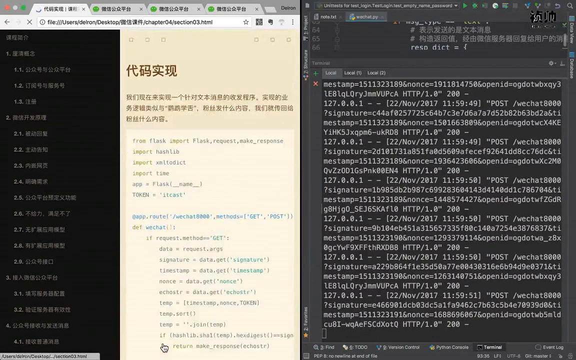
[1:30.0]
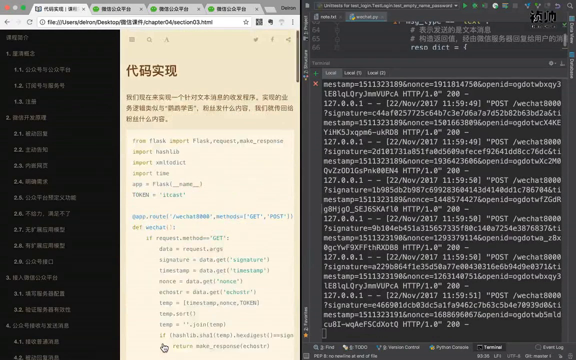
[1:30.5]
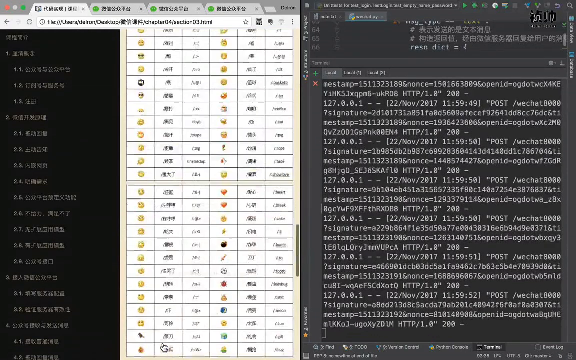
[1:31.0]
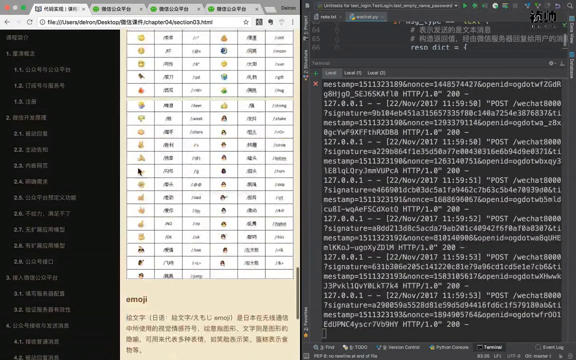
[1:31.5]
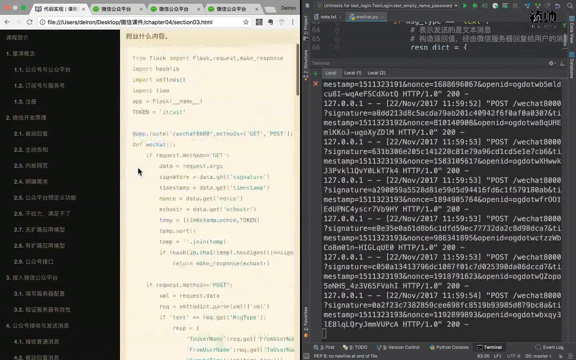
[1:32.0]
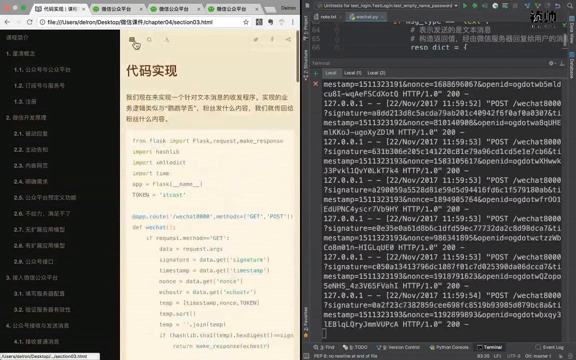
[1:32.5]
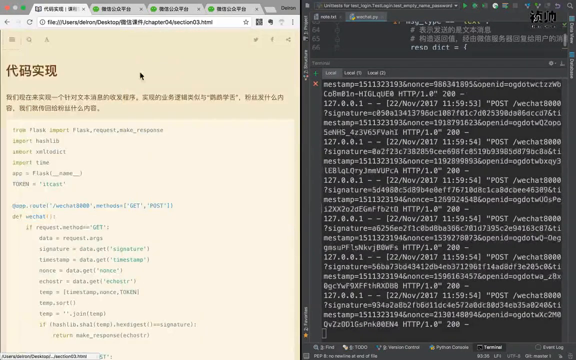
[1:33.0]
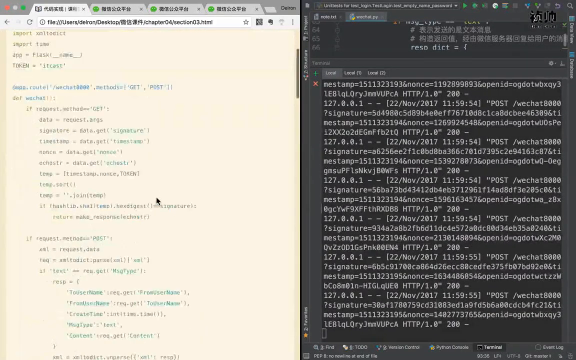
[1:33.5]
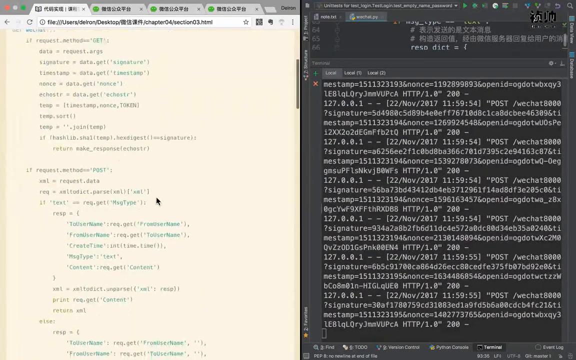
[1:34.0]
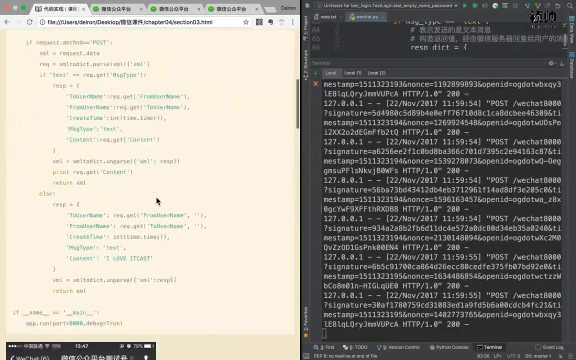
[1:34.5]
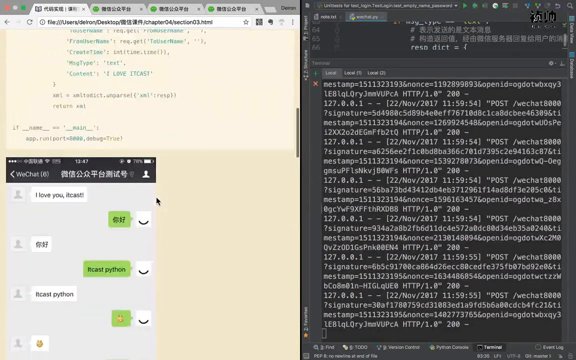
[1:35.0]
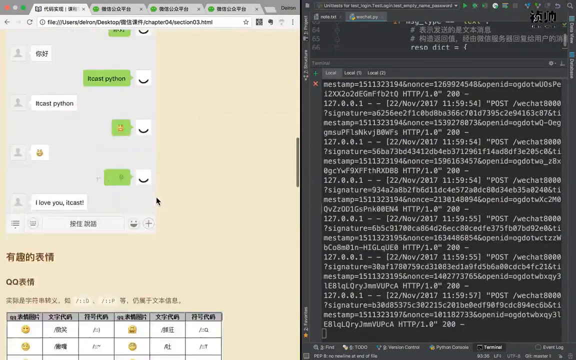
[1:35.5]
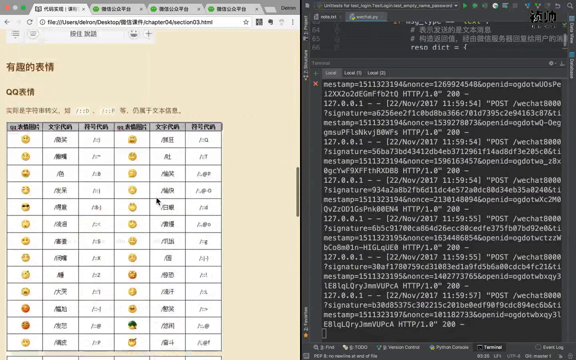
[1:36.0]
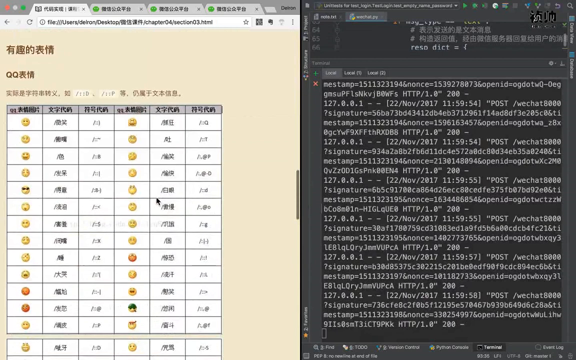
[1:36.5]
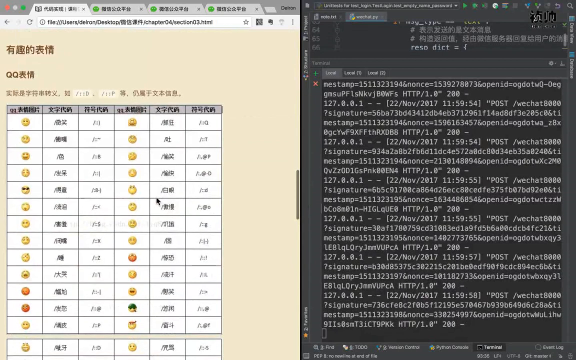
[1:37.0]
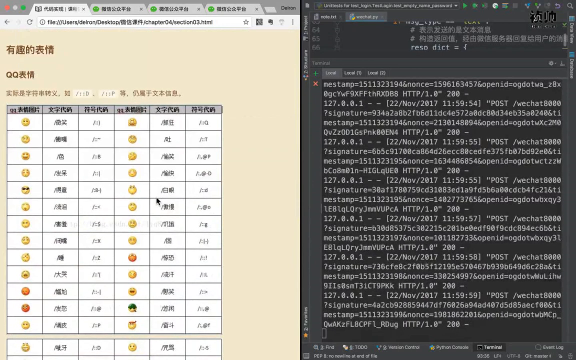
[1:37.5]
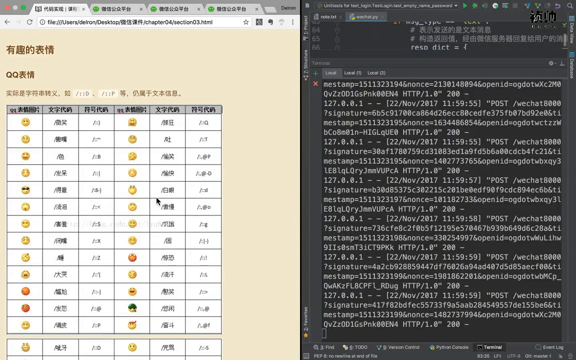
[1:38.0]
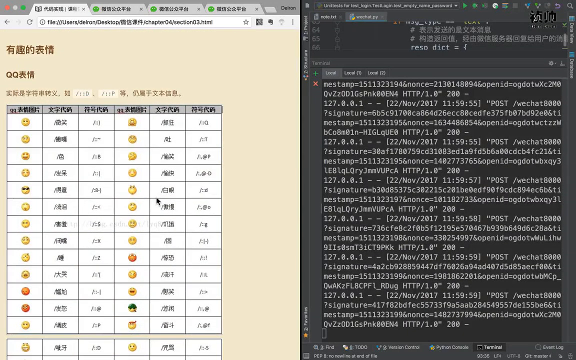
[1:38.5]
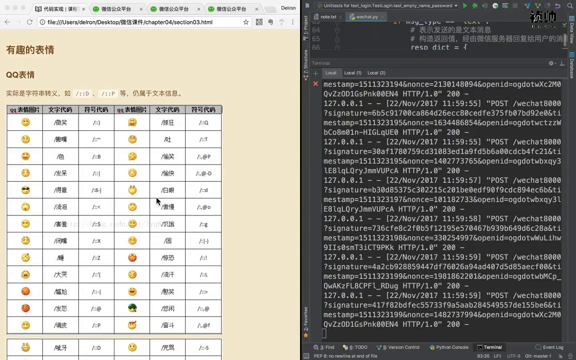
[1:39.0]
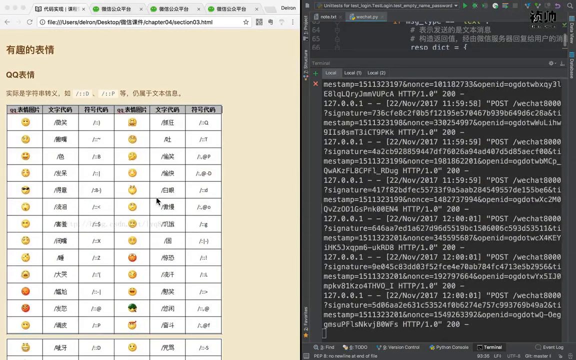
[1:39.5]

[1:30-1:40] A new page comes up, probably after he has clicked on the 4.4 option. It shows a large table filled with emojis, with text associated with each emoji in the same row. He scrolls down and up through it, then quickly scrolls up through the page, looks at some other options and clicks on some things. He appears to be about to hover over and click on the very first emoji, which looks like a regular smiling emoji.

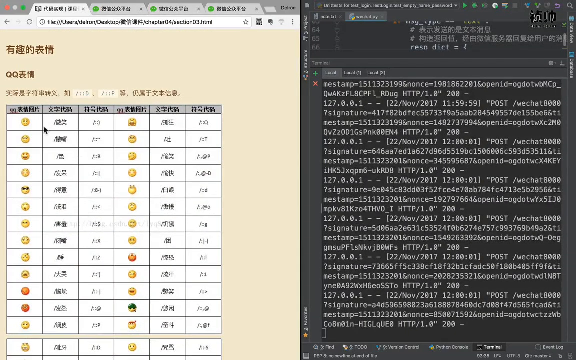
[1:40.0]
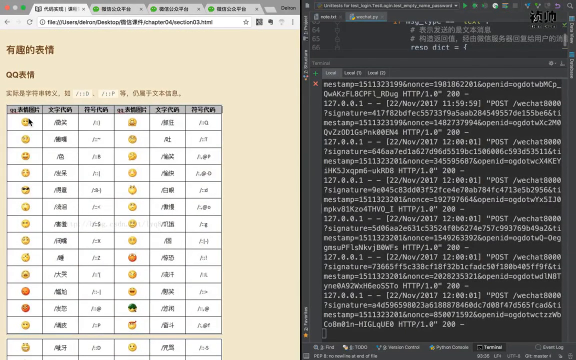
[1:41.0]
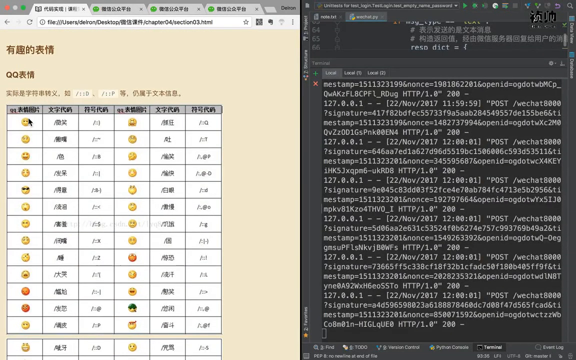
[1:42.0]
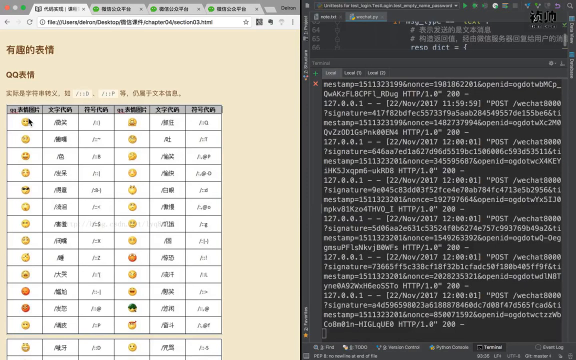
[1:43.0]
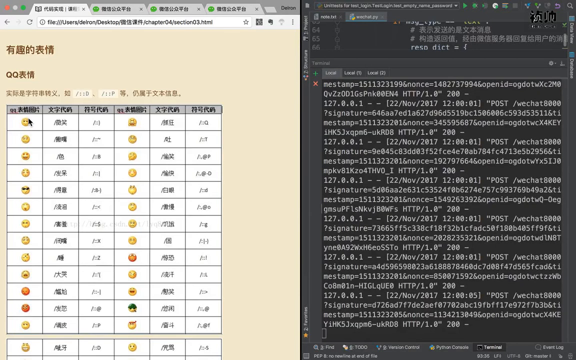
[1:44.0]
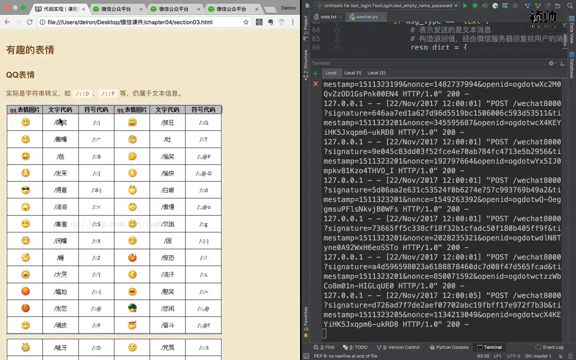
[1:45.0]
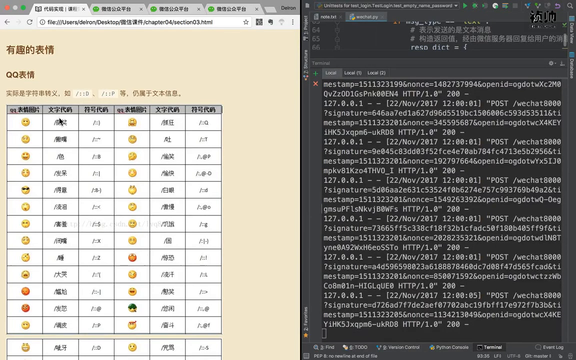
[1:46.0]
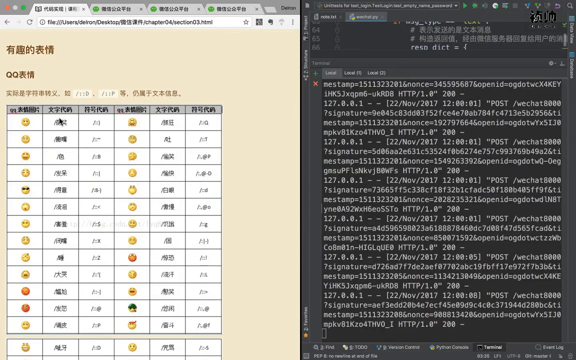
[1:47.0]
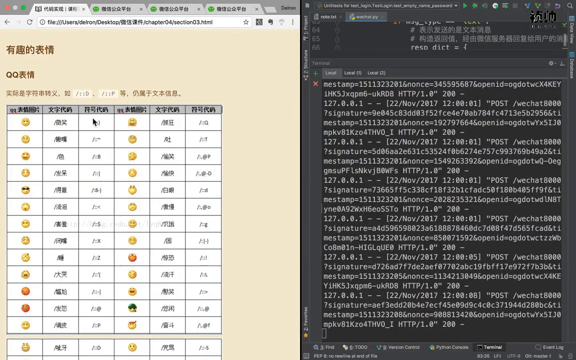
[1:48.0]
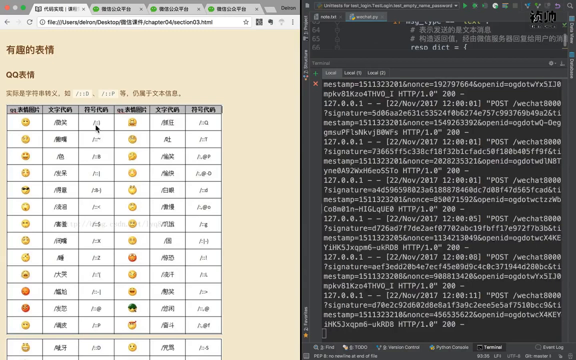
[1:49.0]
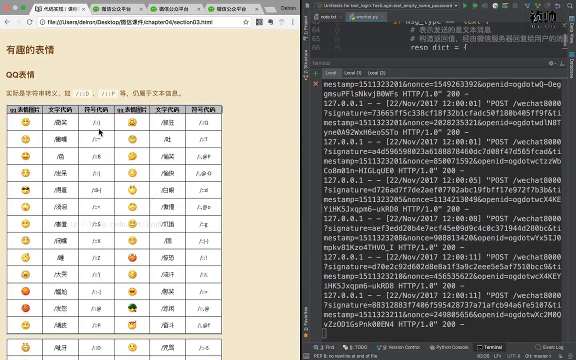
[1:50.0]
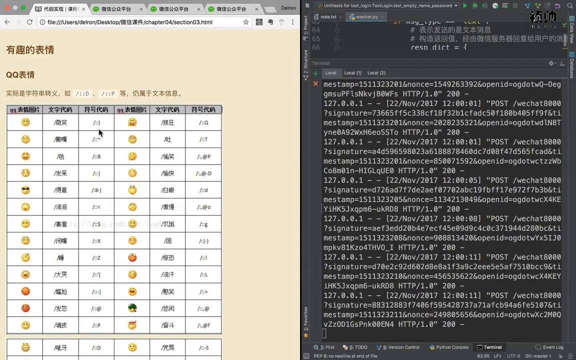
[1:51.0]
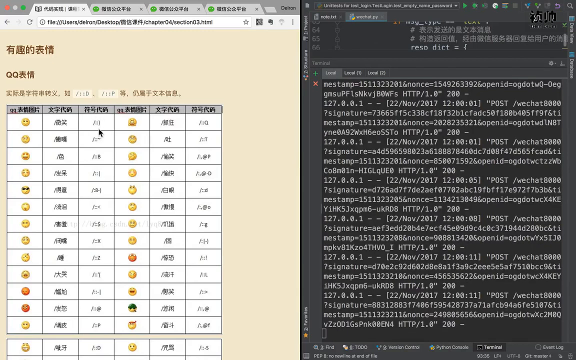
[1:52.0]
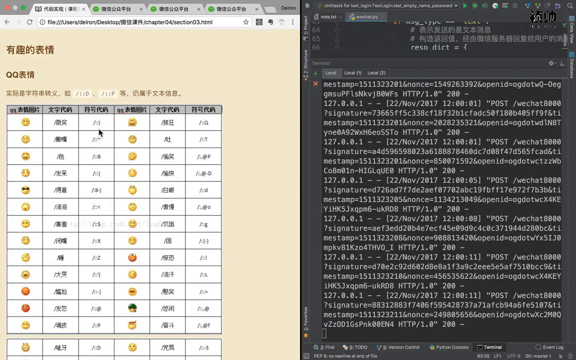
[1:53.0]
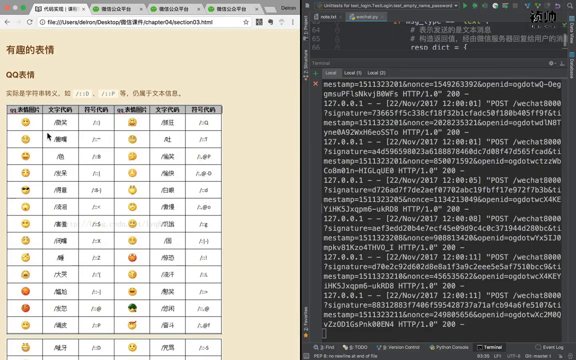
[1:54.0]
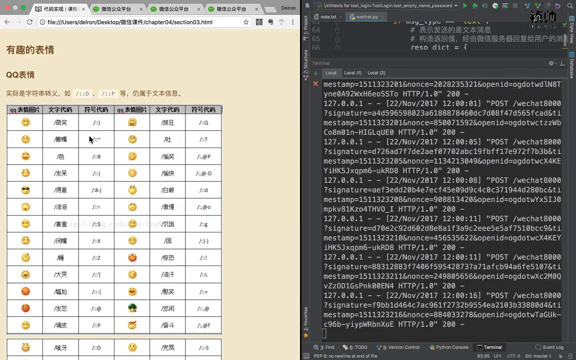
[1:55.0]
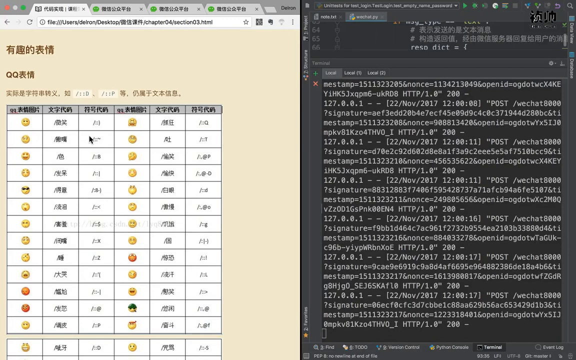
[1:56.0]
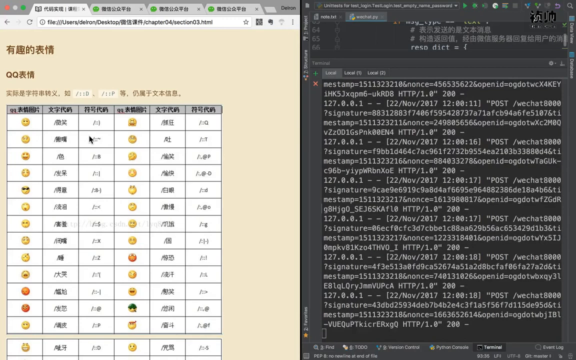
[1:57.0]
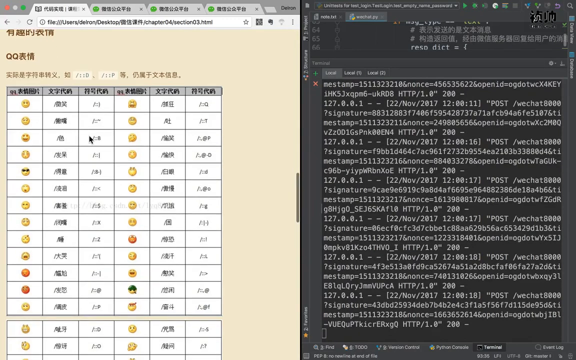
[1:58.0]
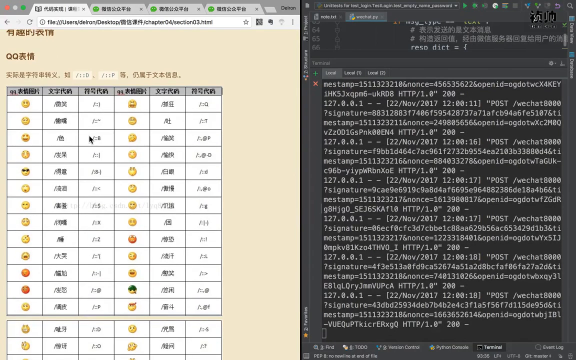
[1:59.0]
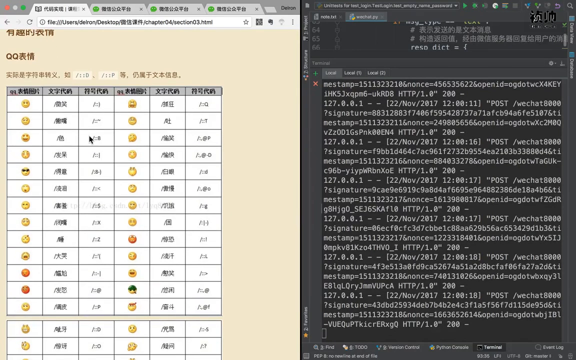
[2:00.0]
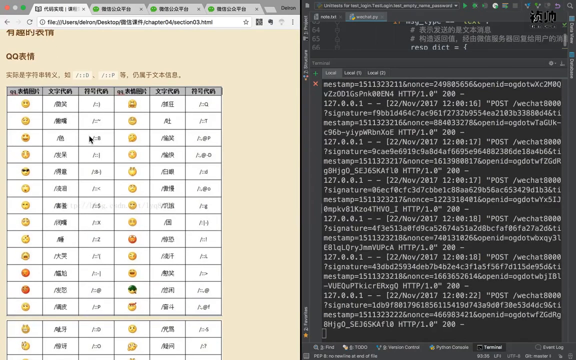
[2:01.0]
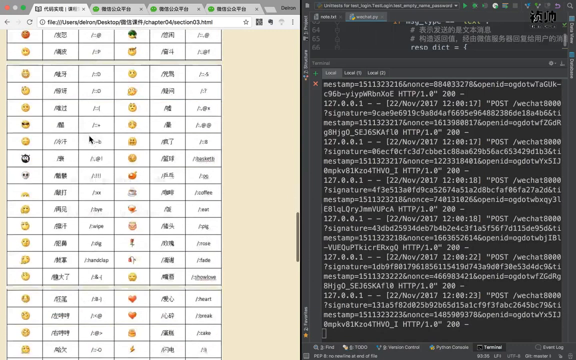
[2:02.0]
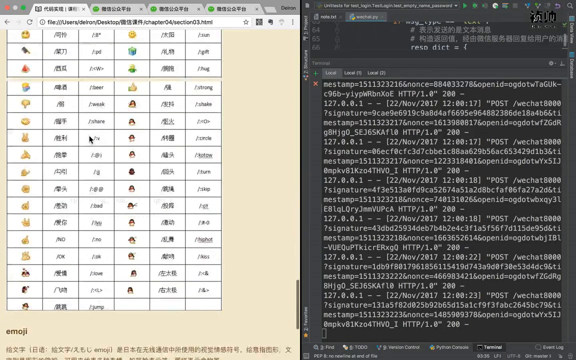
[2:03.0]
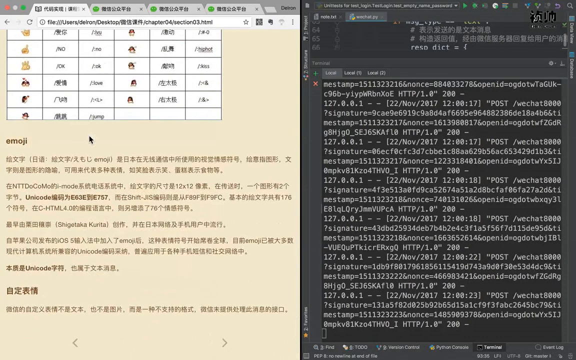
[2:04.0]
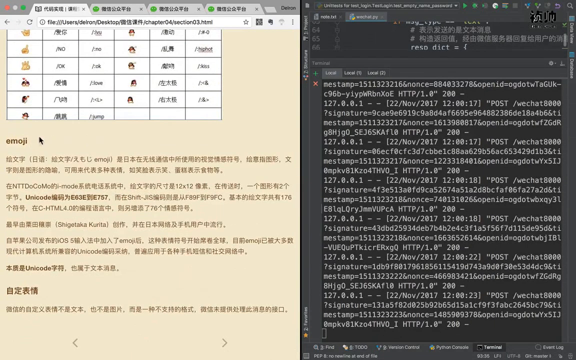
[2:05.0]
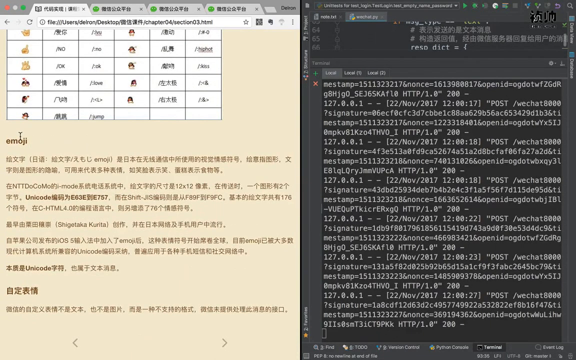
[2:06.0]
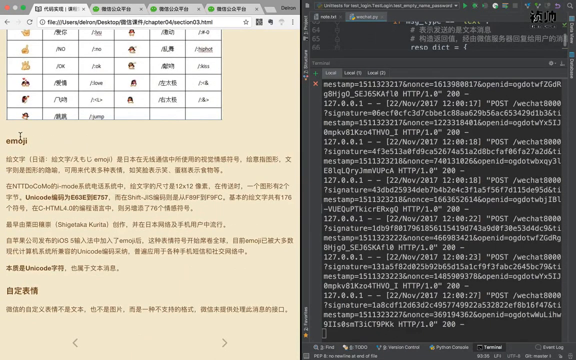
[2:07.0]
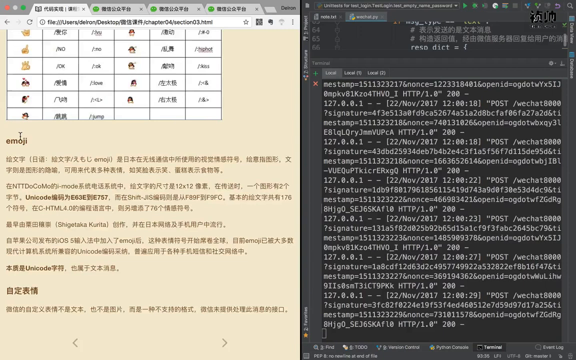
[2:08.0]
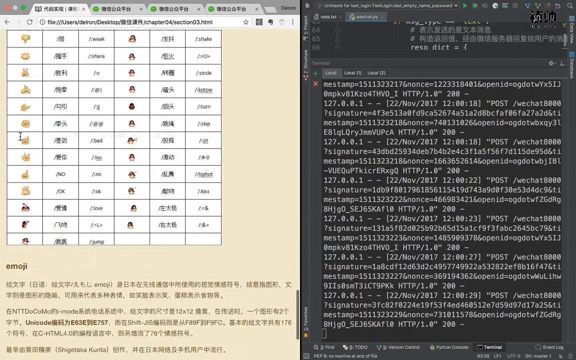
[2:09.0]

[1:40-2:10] He is still hovering over the smiling emoji, then hovers over text in the column to its right. The text appears to be symbols that might produce these emojis; for the smiling one, it seems to be a forward slash, two semicolons and a right or left parenthesis. There is also some Chinese text, probably the name of the emoji. The third column holds the command for putting an emoji into the code.